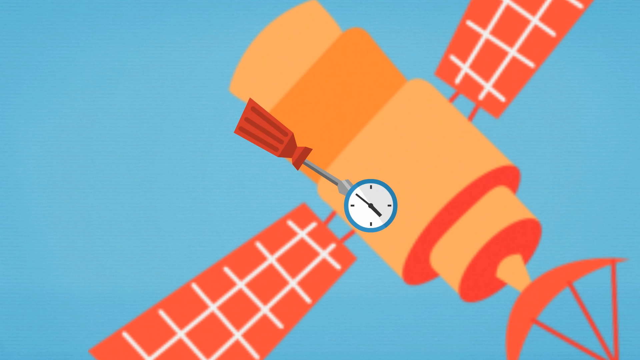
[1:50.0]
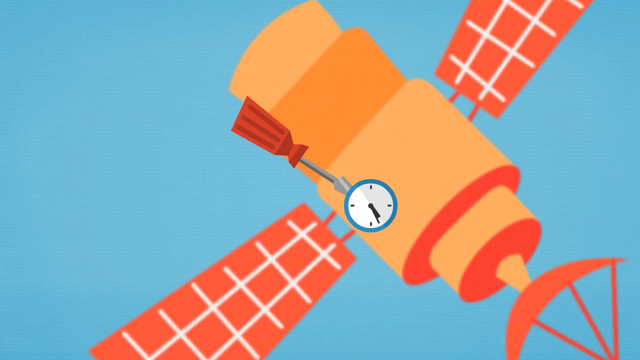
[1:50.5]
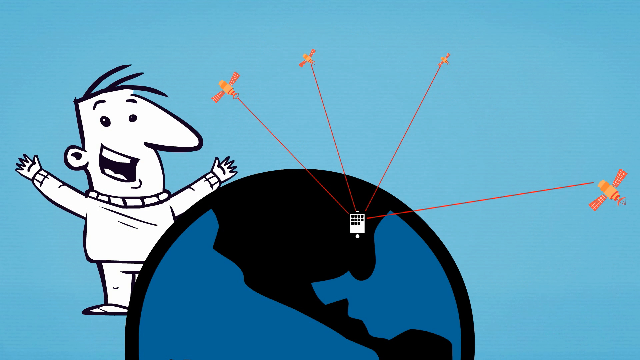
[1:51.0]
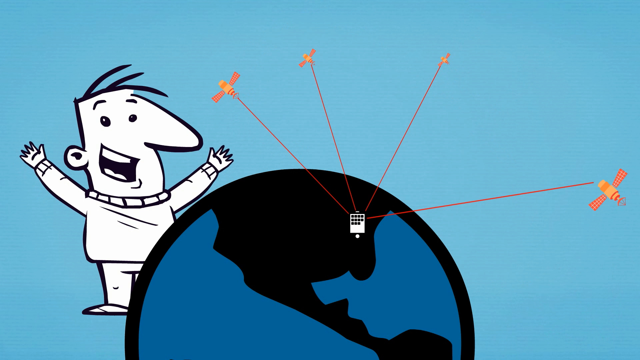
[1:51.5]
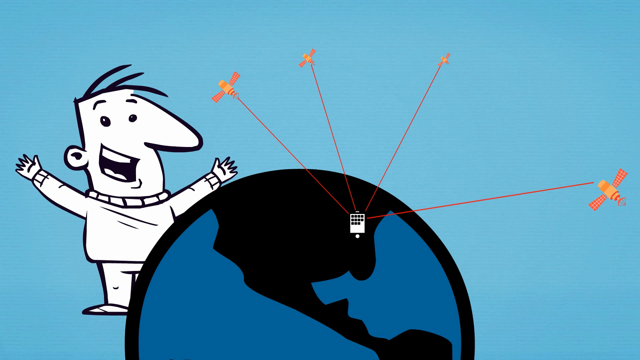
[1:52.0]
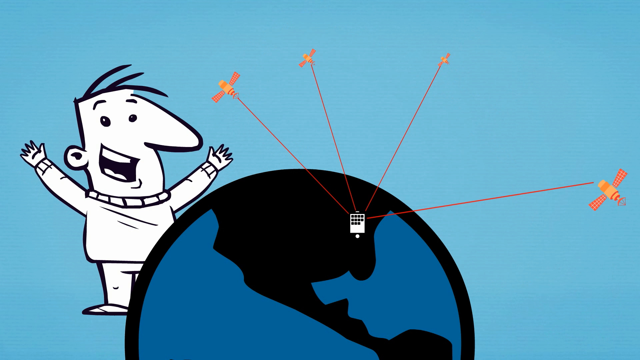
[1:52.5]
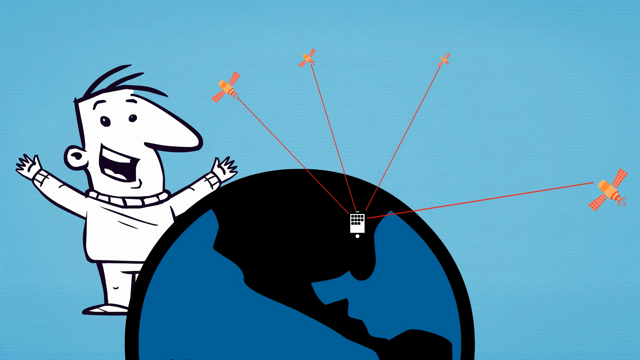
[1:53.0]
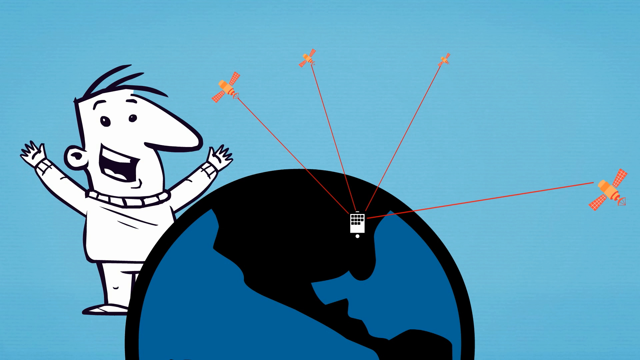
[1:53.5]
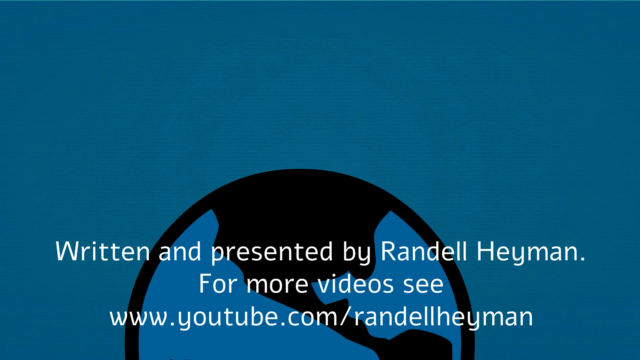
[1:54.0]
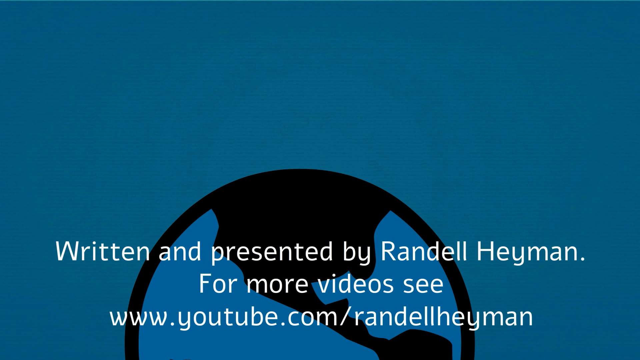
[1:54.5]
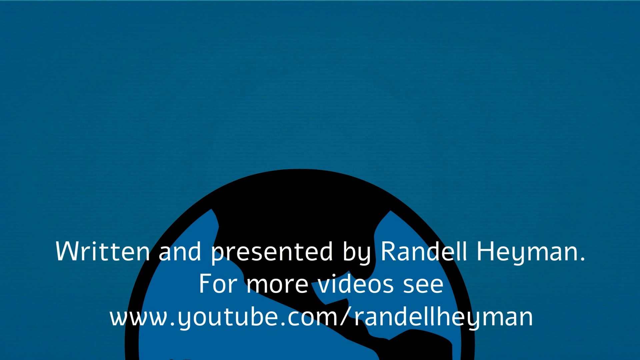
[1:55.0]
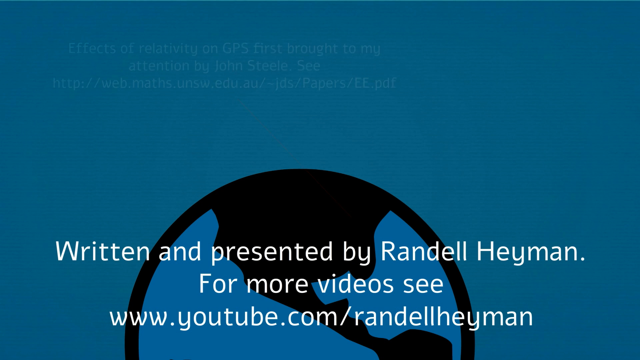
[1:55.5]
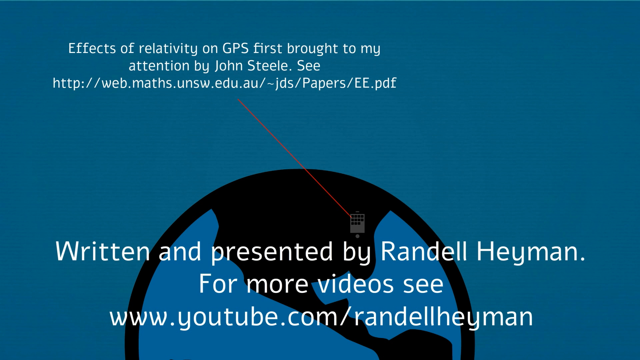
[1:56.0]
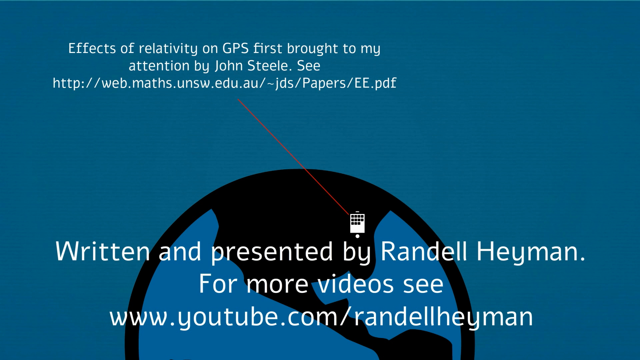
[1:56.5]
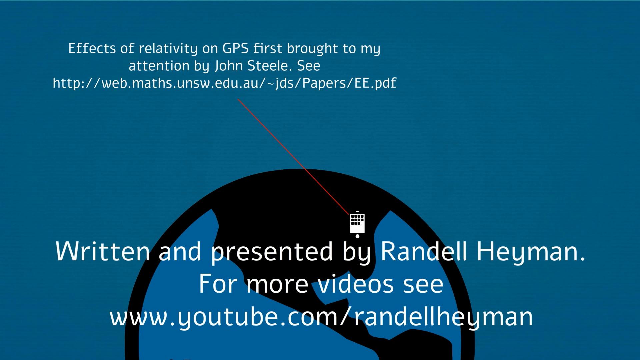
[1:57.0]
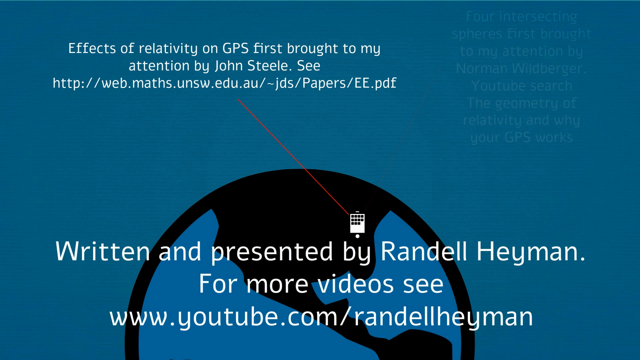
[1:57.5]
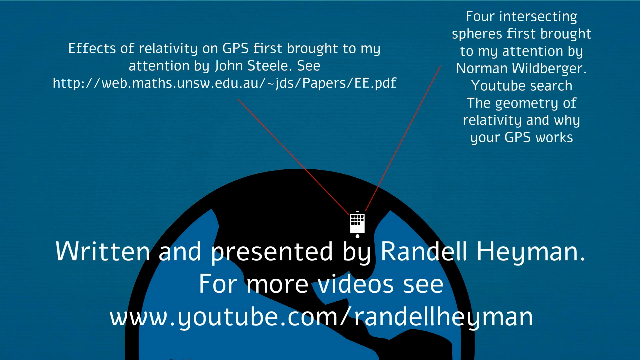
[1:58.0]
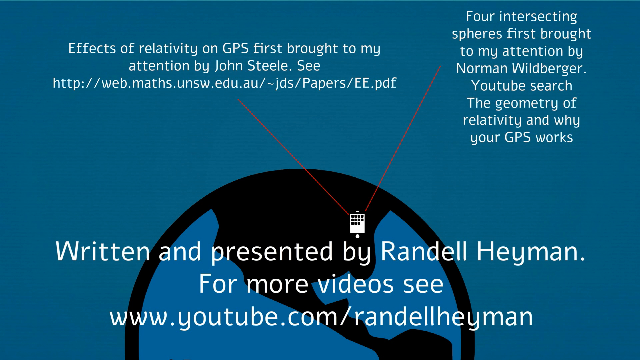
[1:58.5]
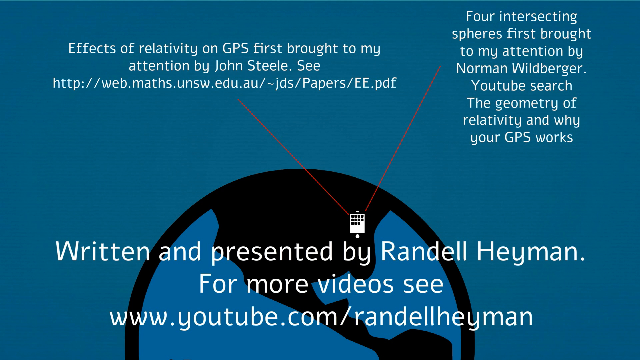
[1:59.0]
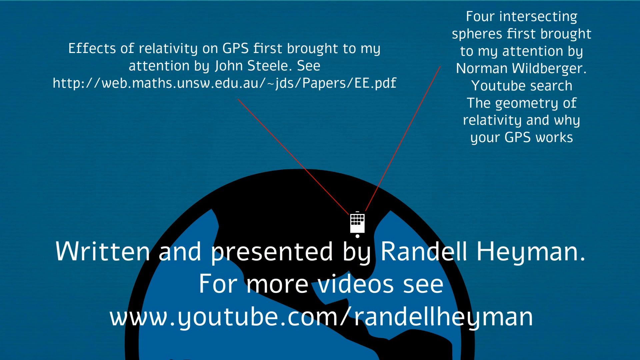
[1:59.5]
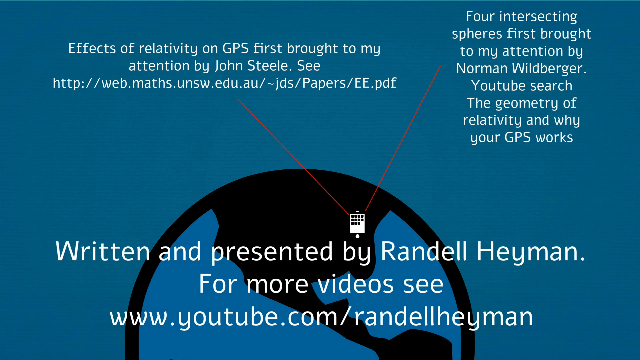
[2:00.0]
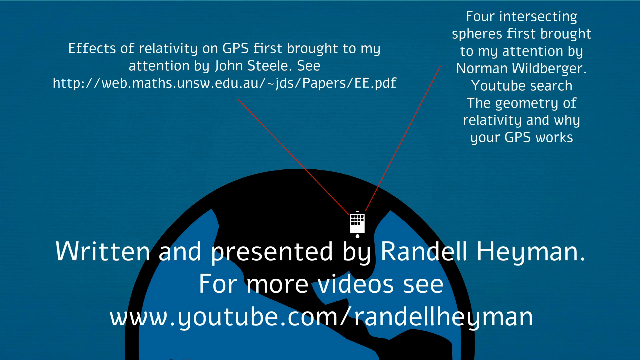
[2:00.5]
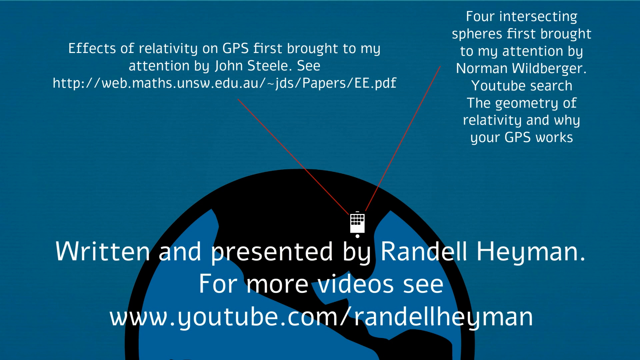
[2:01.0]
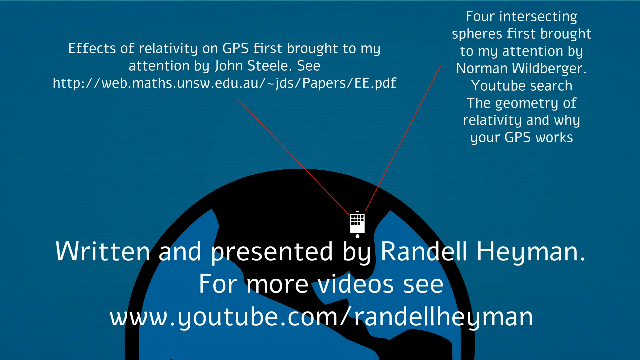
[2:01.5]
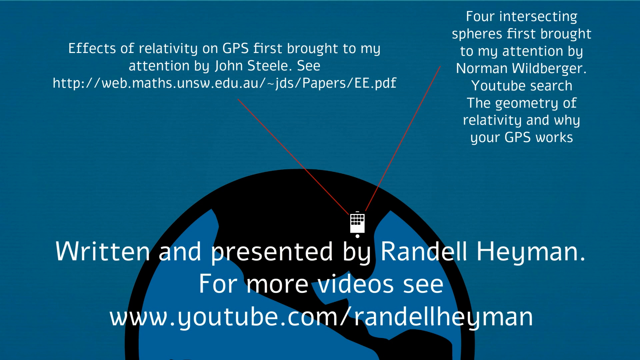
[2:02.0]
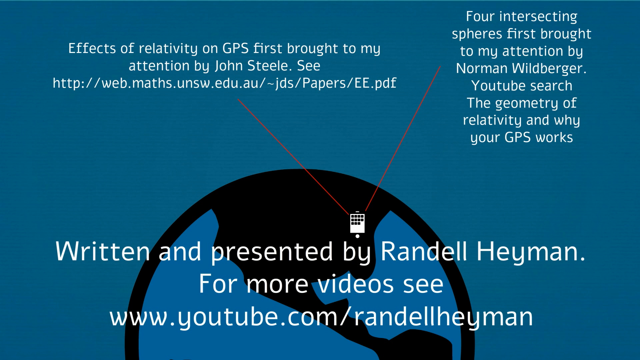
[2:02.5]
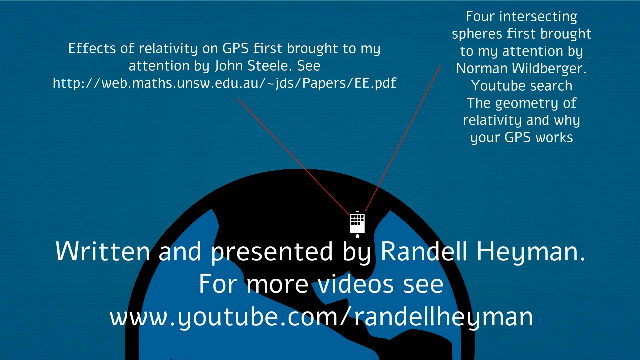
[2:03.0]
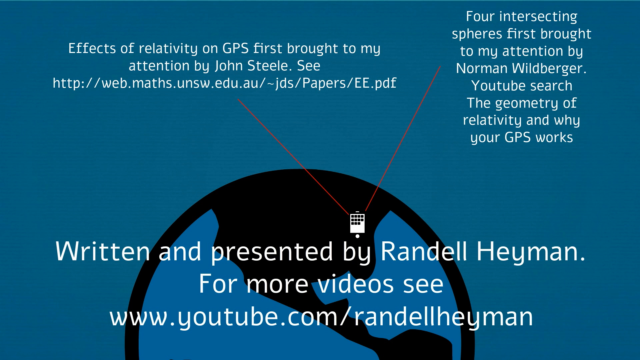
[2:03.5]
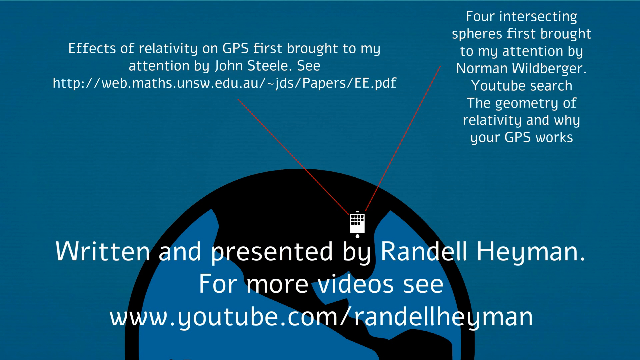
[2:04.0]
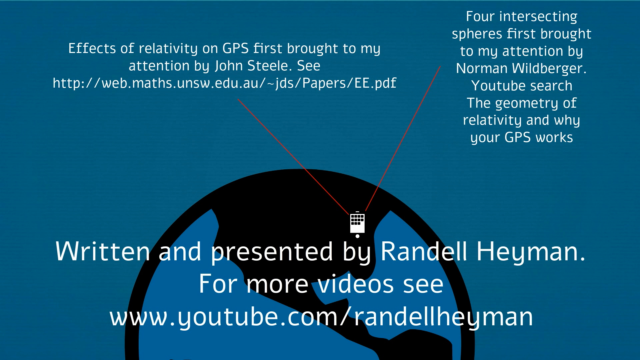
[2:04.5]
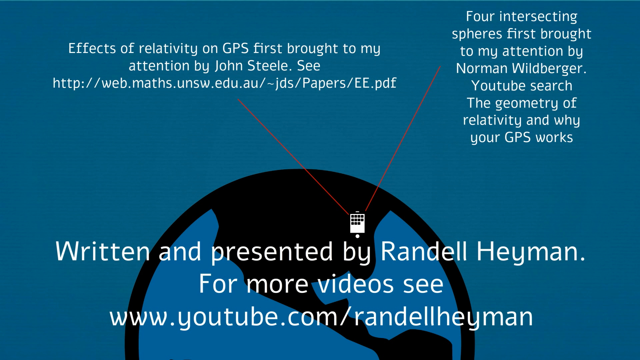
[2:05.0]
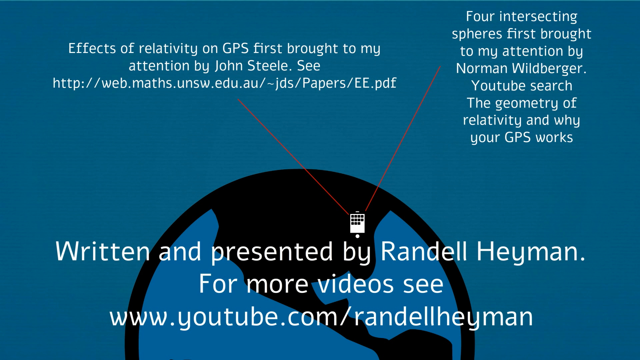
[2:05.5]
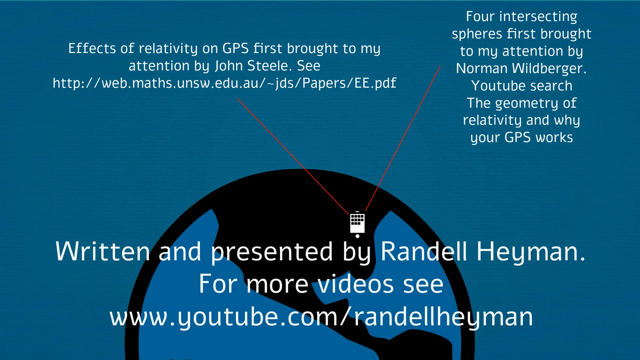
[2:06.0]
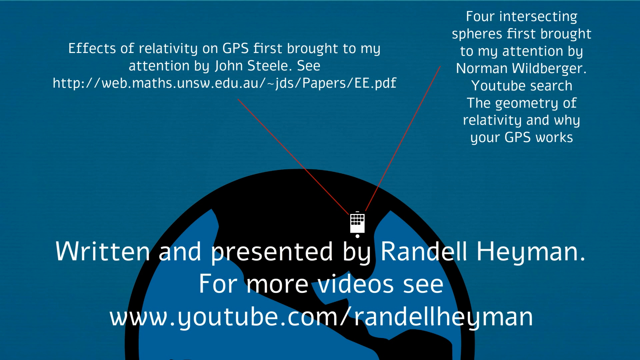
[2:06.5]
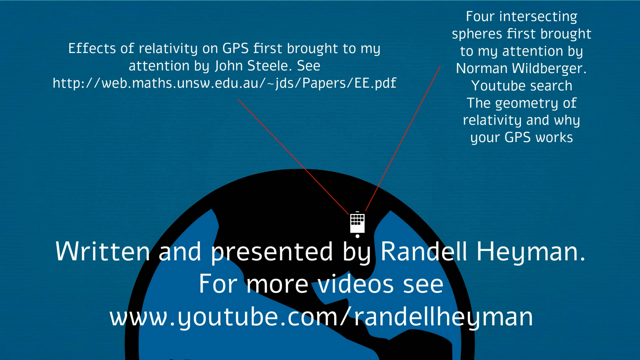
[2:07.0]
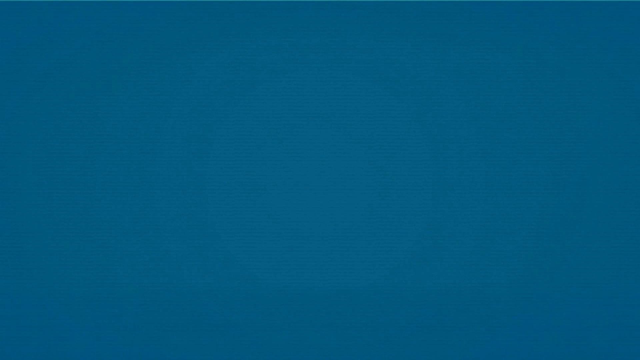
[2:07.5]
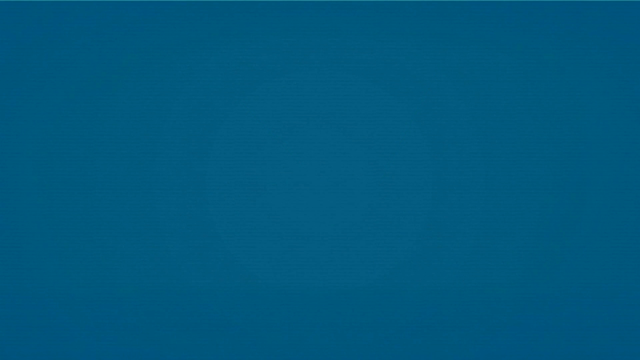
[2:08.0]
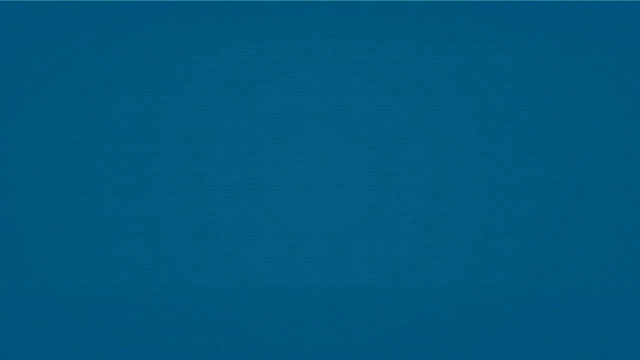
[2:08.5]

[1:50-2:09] On a light blue screen, the animated man stands behind half of the black planet, which has blue water. The black planet fills half of the picture, with a cell phone at the top of the planet attached by red lines to four satellites in the sky, two a little to the left and two a little to the right of the cell phone. The cartoon man waves his arms. The next screen shows, in white text, who wrote the video. A telephone is attached by a red line to the first white text at the top left of the screen, then white text appears at the top right, also attached by a red line to the cell phone, which sits on the planet. At the bottom, larger white text shows who wrote and presented the video.